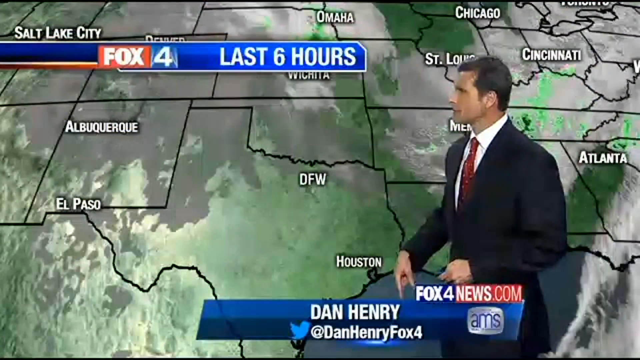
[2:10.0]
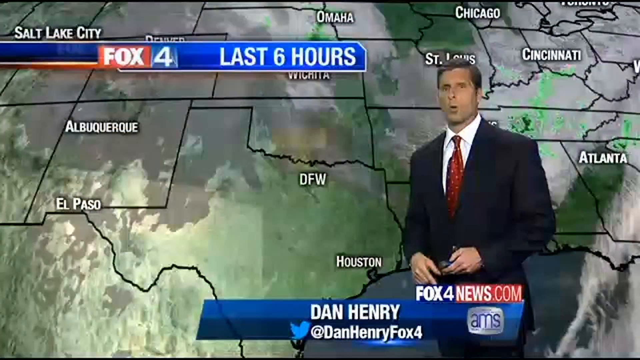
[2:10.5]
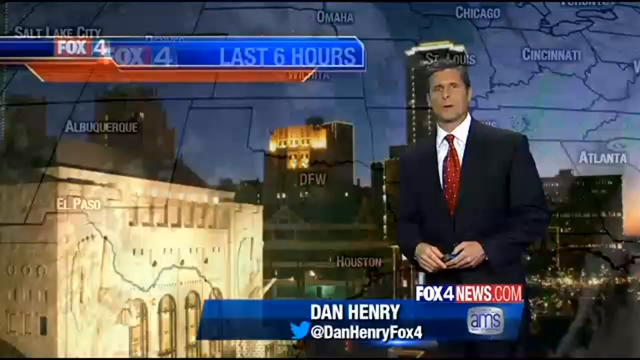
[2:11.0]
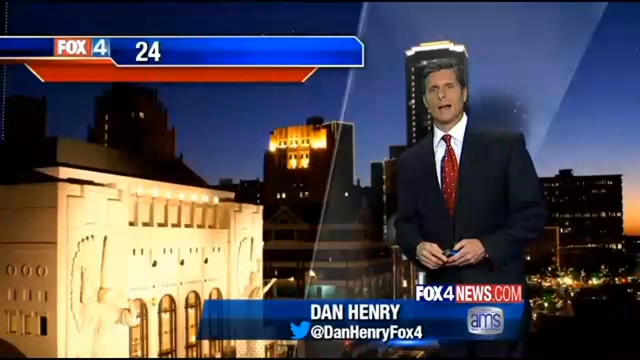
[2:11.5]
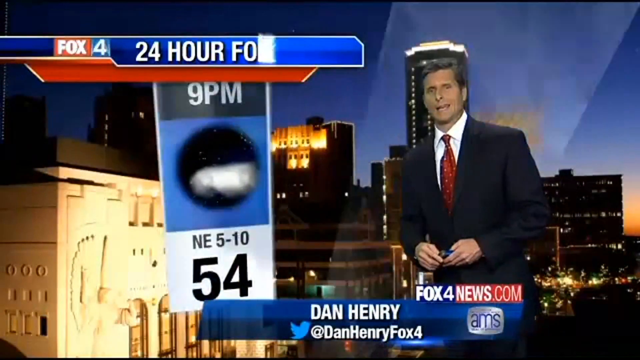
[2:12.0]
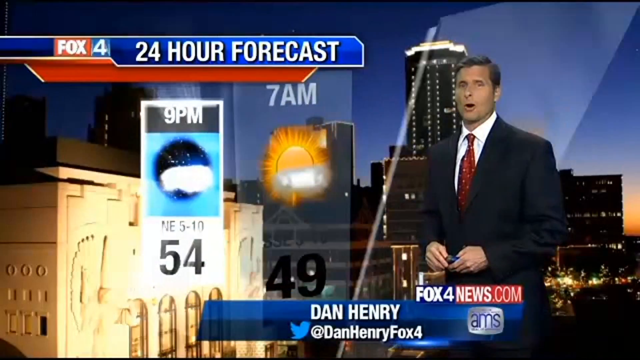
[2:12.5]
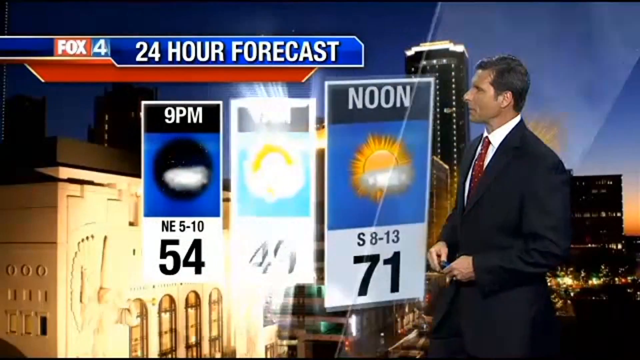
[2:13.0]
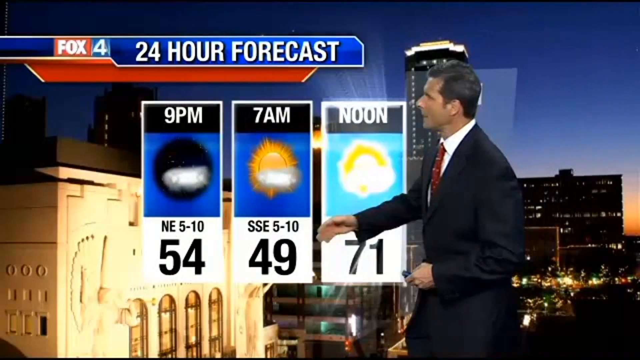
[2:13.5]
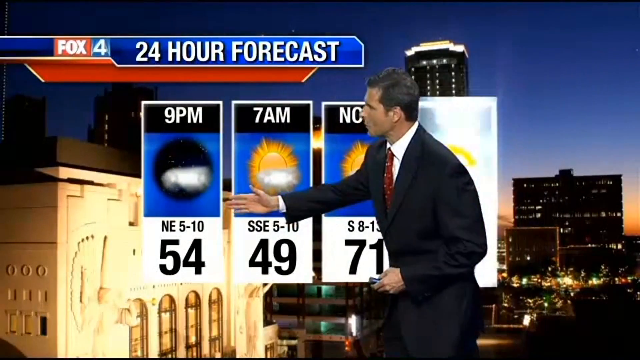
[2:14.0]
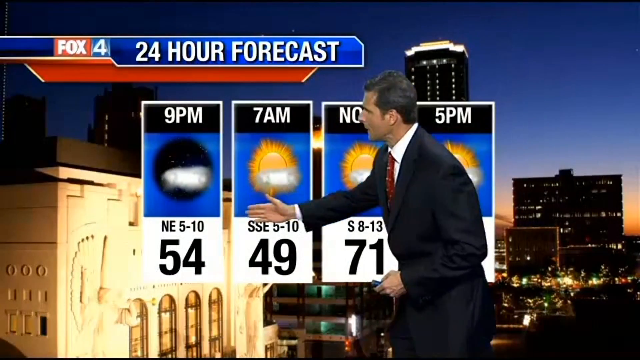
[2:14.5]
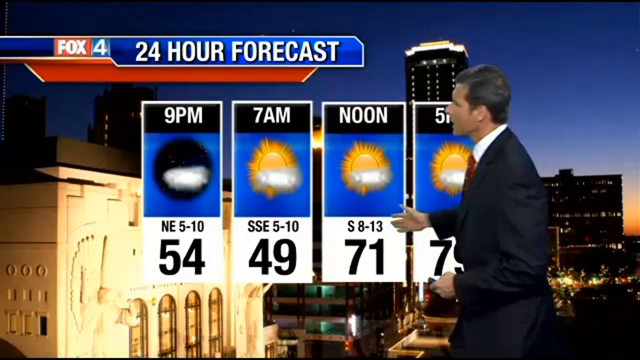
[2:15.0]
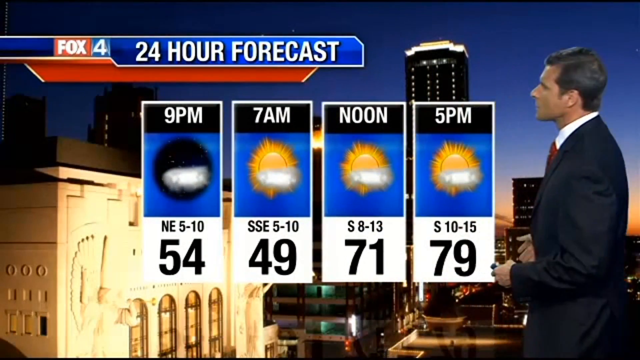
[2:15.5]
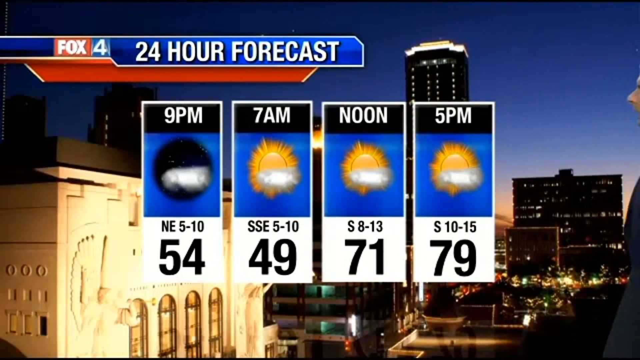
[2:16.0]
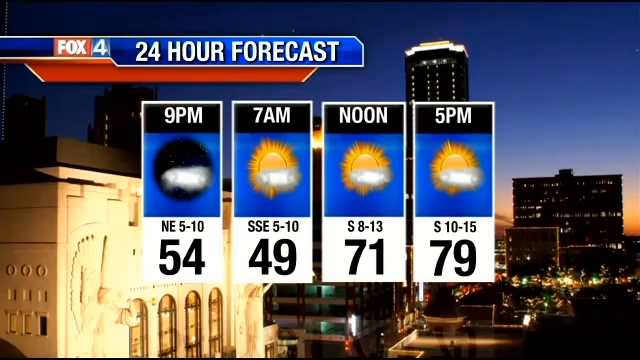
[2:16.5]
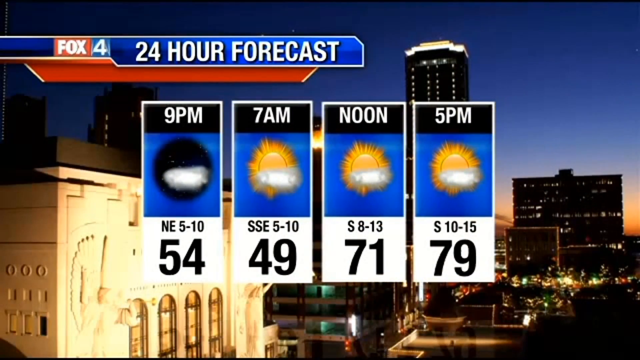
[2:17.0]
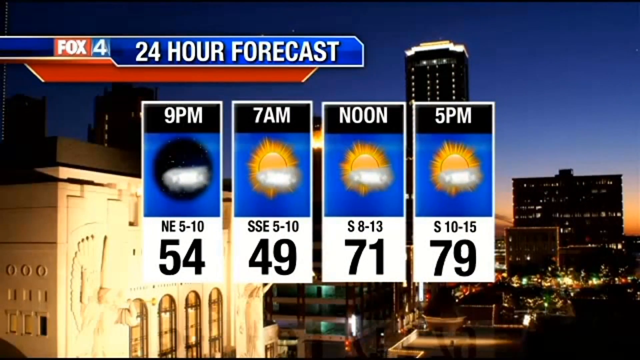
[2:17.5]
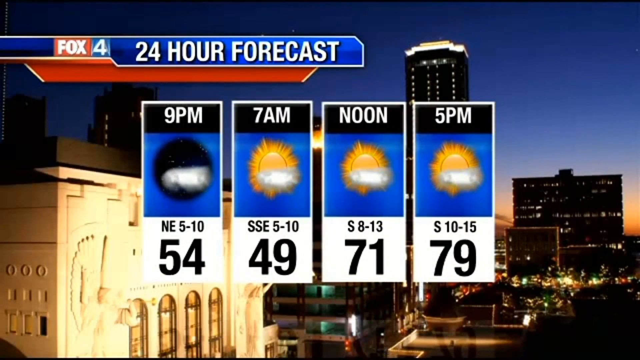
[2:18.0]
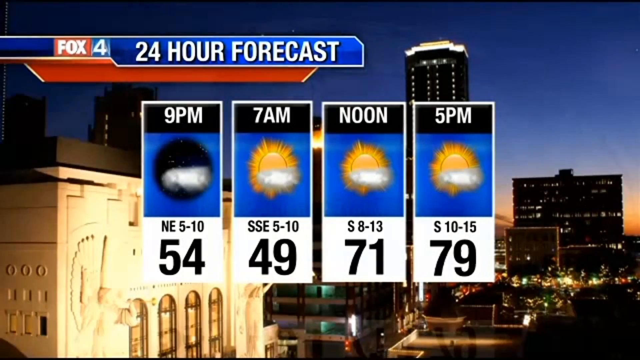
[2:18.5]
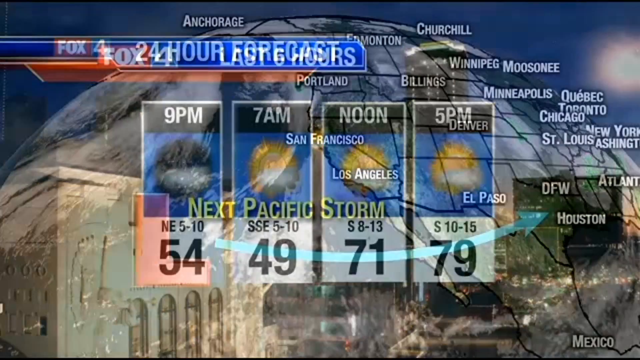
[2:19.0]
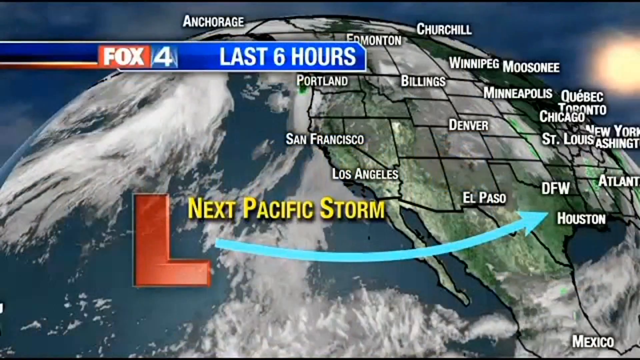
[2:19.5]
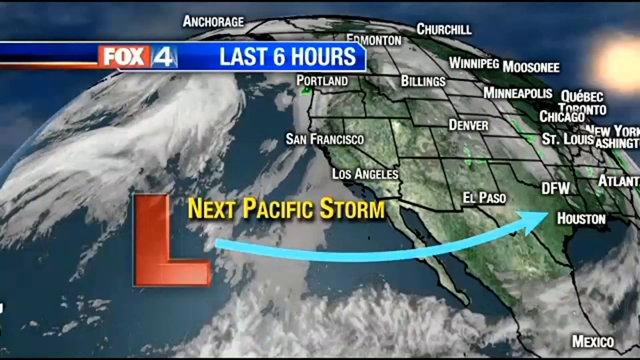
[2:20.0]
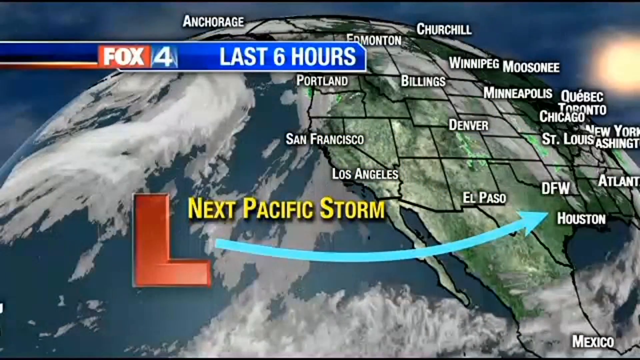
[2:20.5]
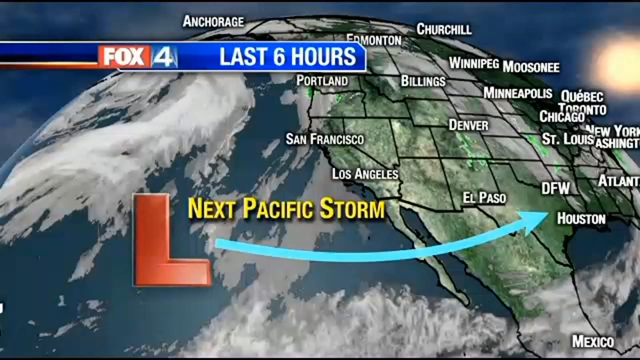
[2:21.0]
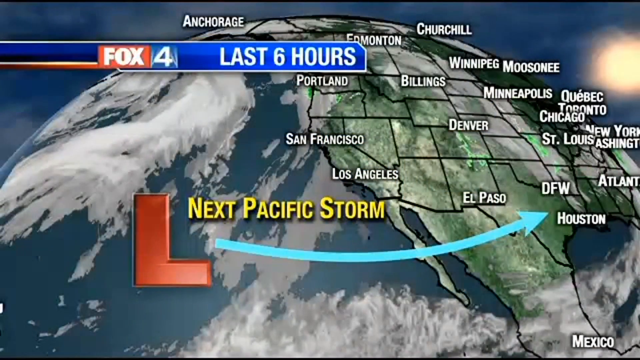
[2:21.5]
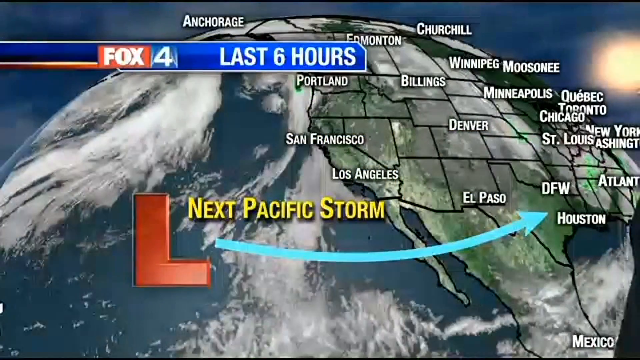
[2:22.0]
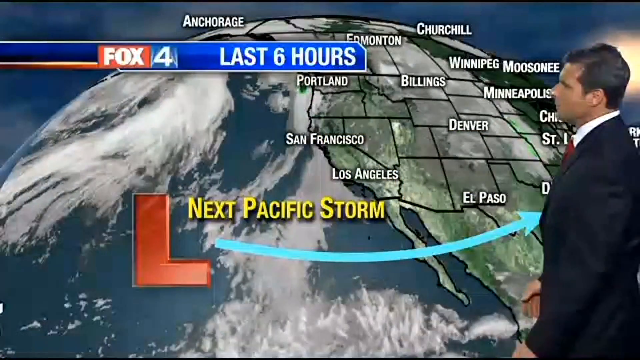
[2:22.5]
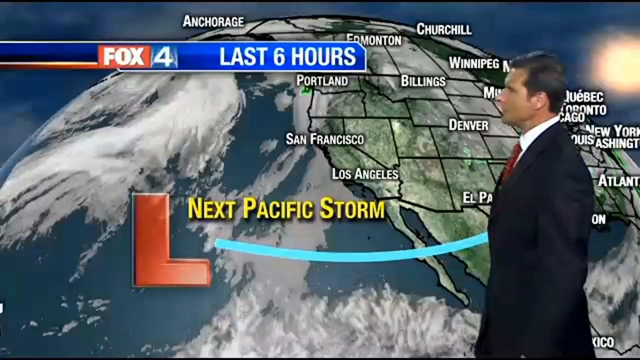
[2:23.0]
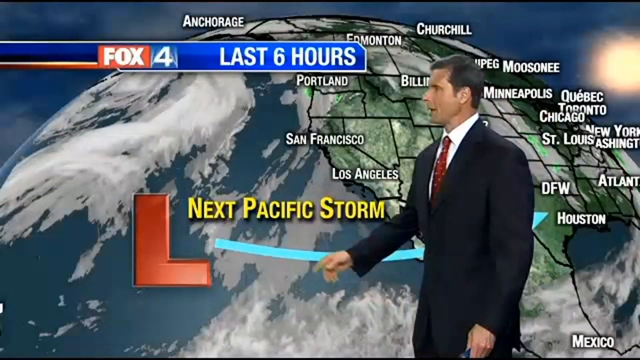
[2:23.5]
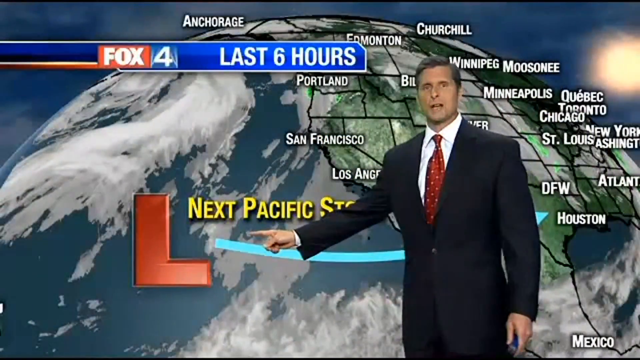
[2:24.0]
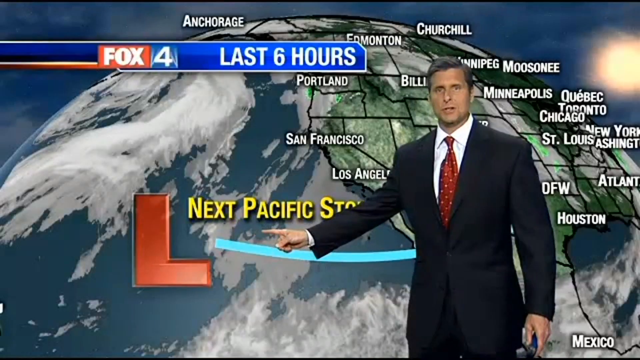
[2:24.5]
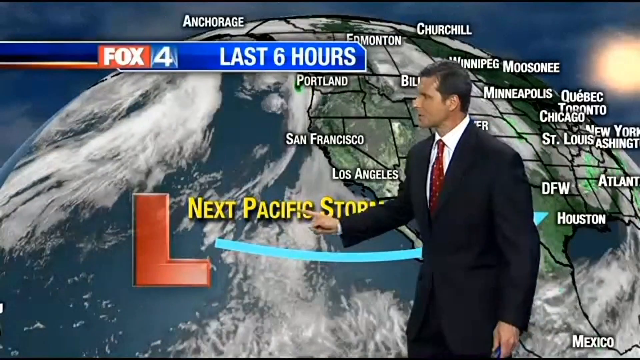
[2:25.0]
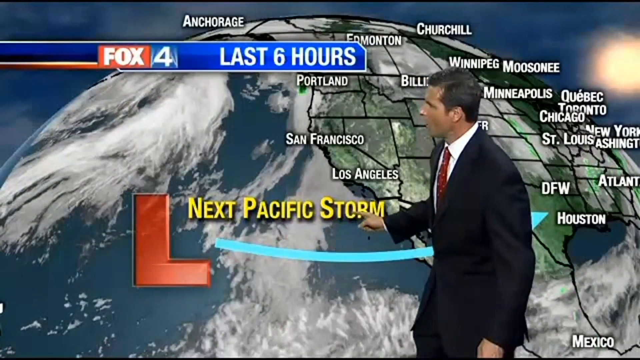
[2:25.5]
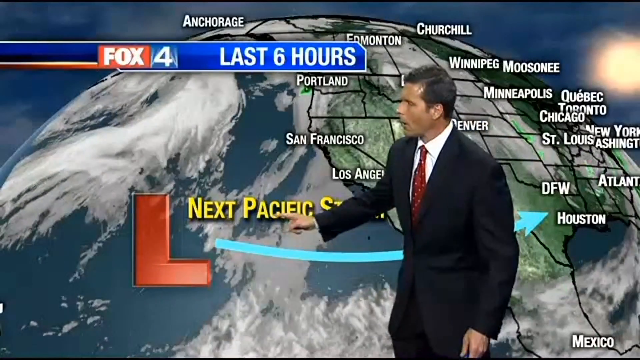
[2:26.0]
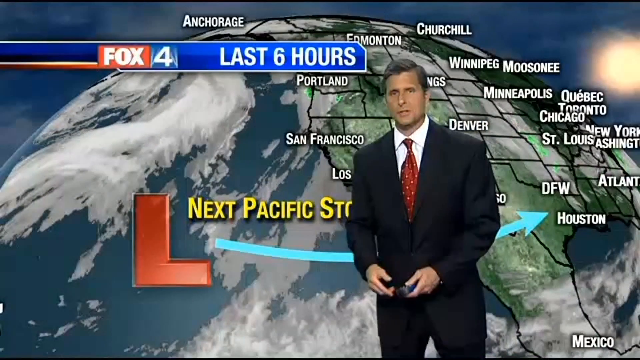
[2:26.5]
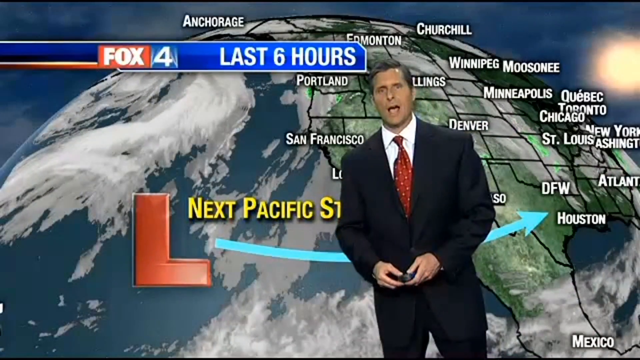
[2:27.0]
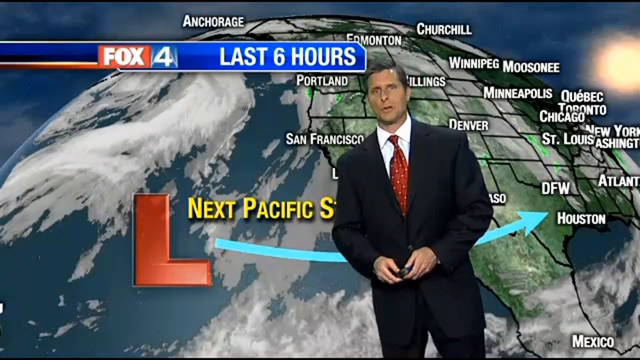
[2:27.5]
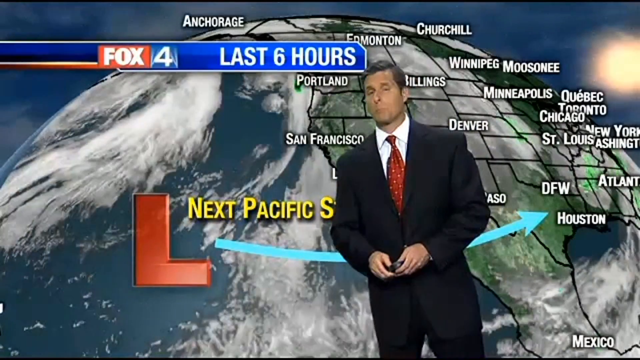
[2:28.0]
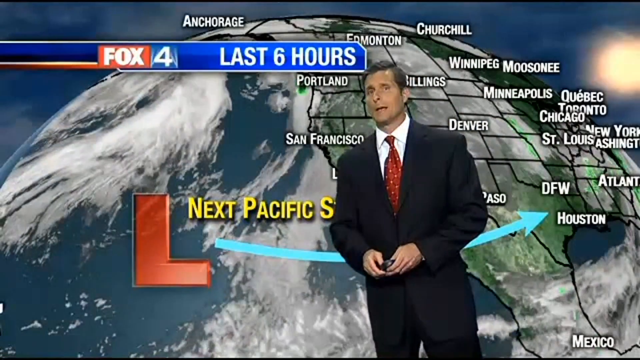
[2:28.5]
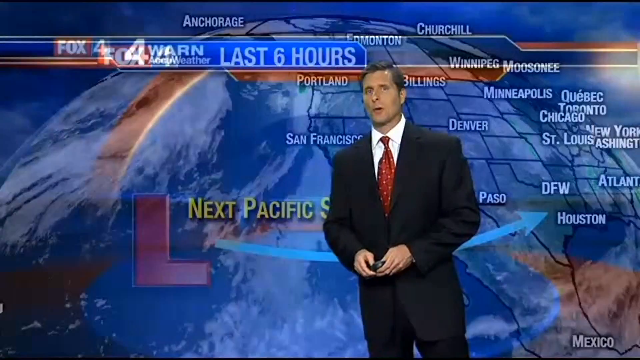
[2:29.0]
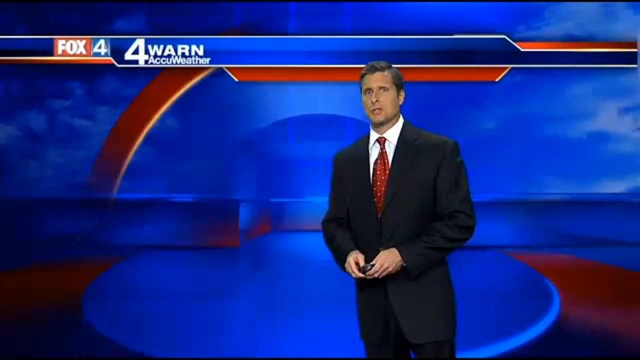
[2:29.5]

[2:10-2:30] A weatherman is on screen looking at what looks like a map of the United States, showing the central part of the country including Texas and Omaha. The map fades away and a cityscape with buildings at night, lights on, appears. In the foreground is a logo reading "Fox 4", with "24-hour forecast" to its right, and a forecast that runs from 9 p.m. to 5 p.m.; under 9 p.m. there is a cloud and the temperature. The video cuts to an image of the west coast of the United States showing the Pacific with some clouds. A giant red L is in the foreground, and next to it yellow text reads "next Pacific storm". A light blue arrow points from the Pacific all the way to Texas, and white text shows the names of cities on the map of the United States. The weatherman points at the yellow letters as he continues to look at the camera and talk.